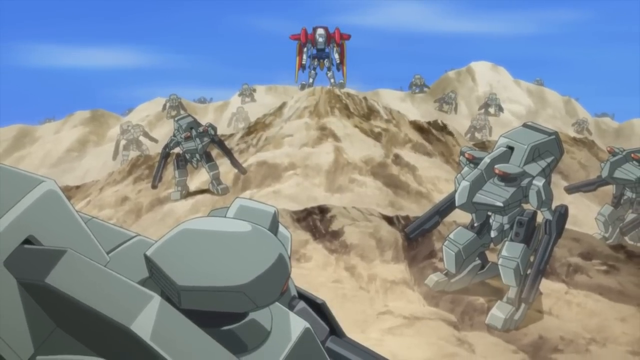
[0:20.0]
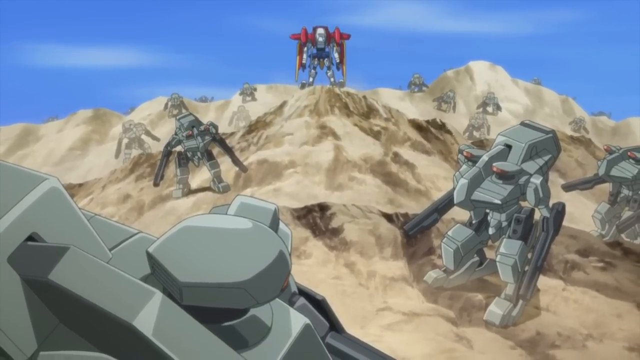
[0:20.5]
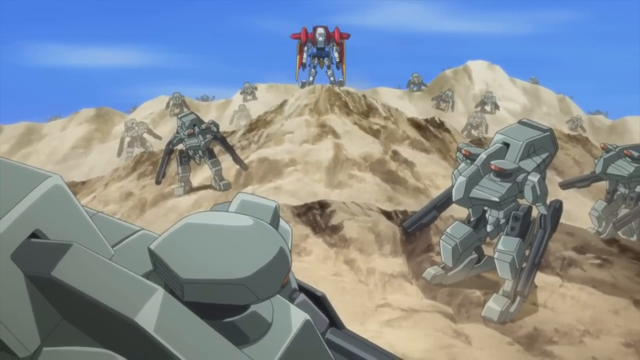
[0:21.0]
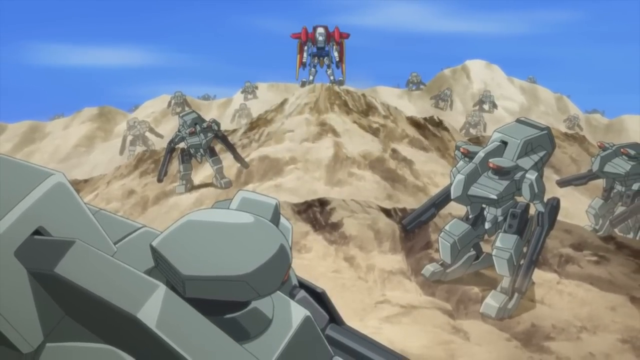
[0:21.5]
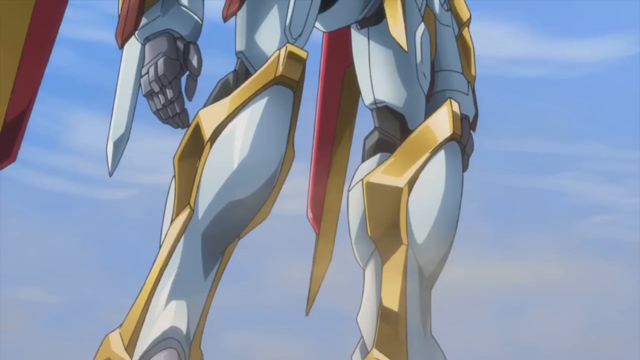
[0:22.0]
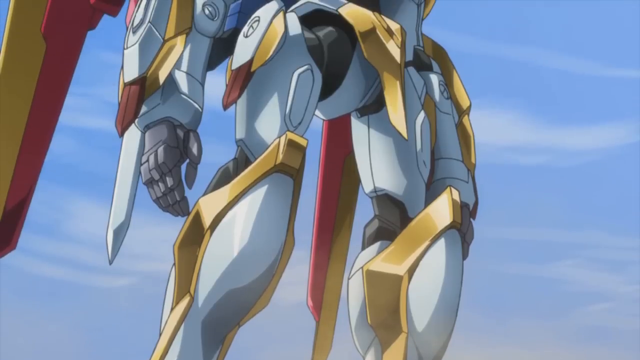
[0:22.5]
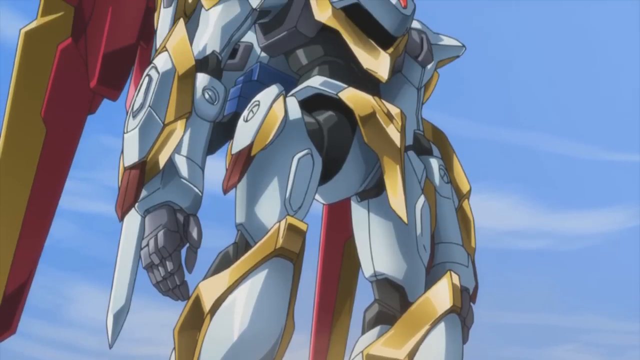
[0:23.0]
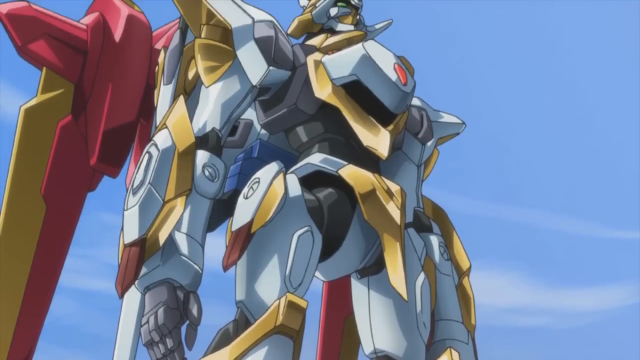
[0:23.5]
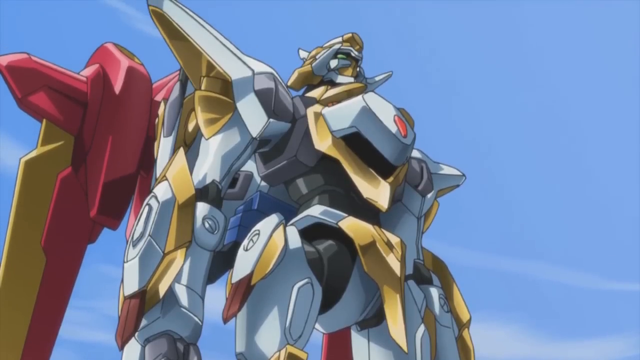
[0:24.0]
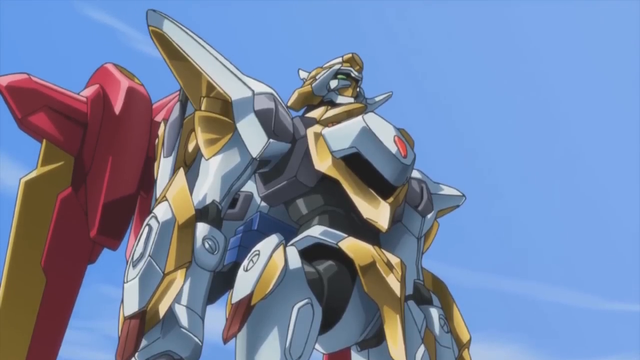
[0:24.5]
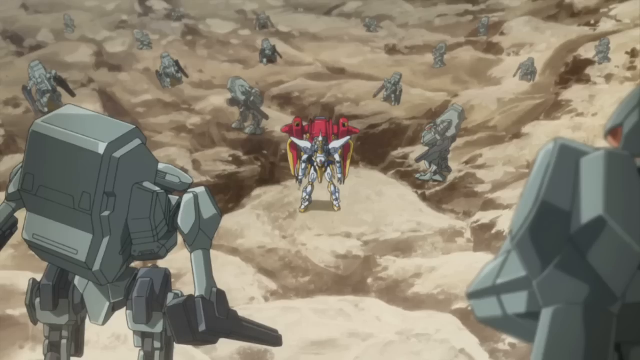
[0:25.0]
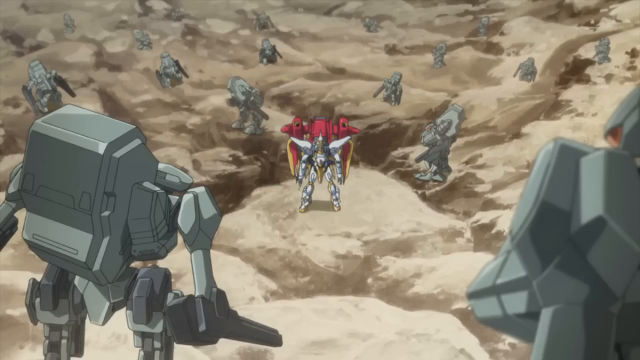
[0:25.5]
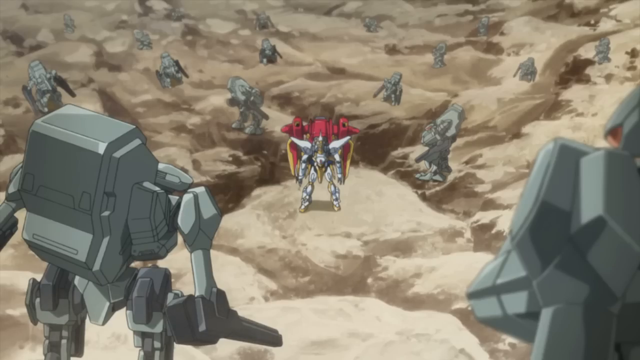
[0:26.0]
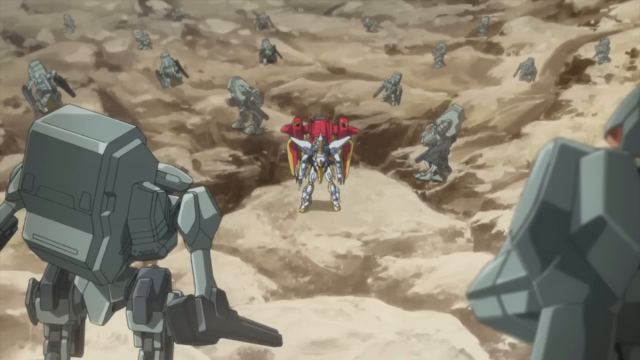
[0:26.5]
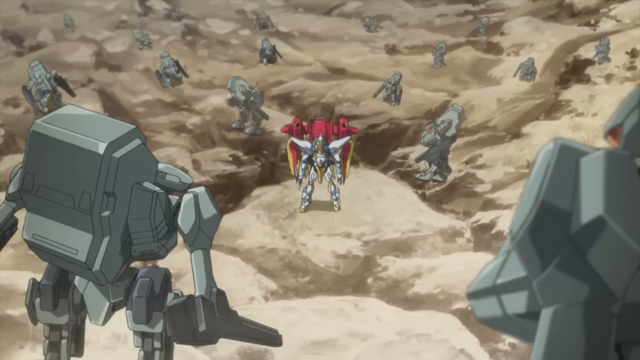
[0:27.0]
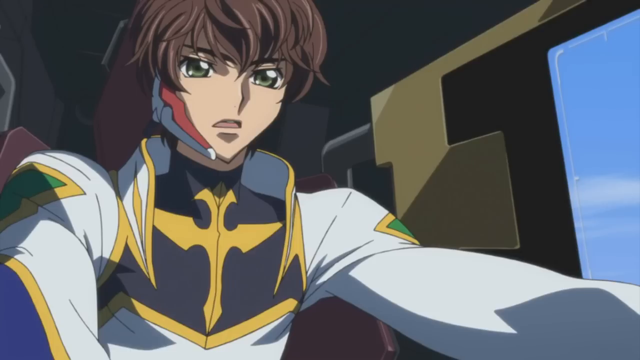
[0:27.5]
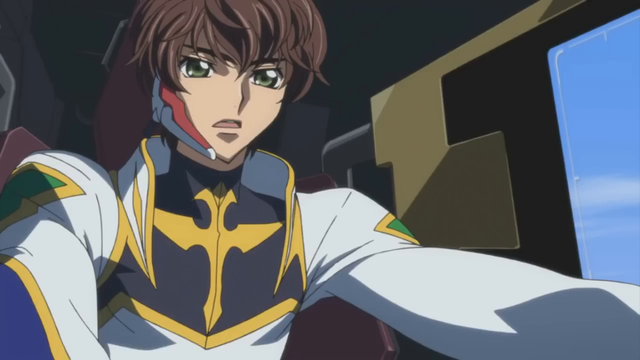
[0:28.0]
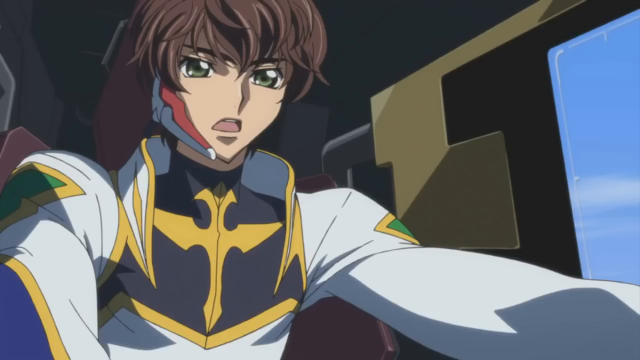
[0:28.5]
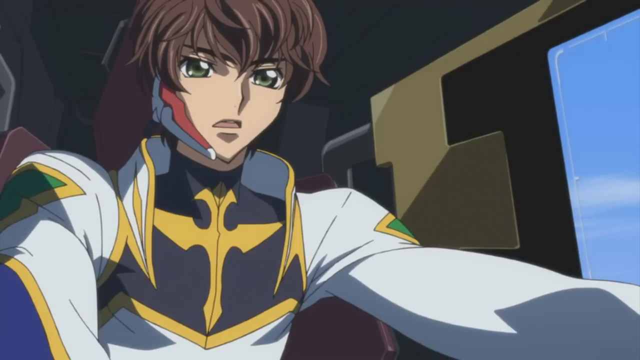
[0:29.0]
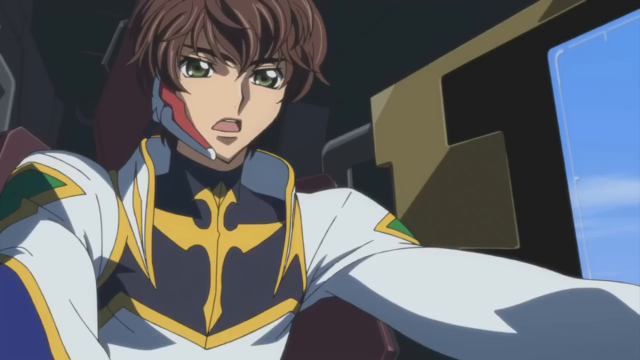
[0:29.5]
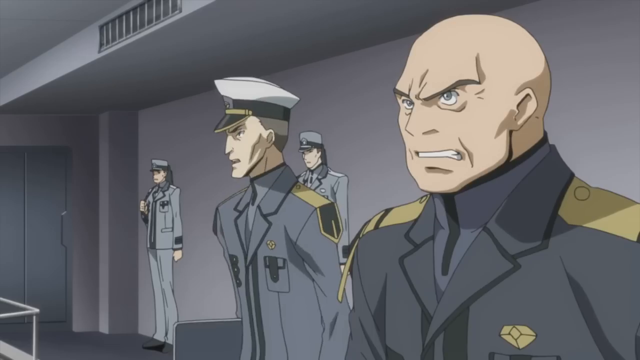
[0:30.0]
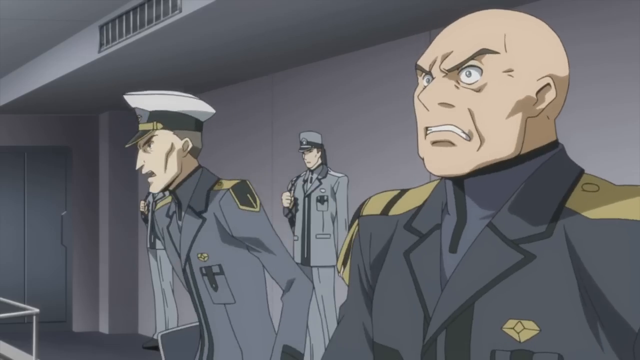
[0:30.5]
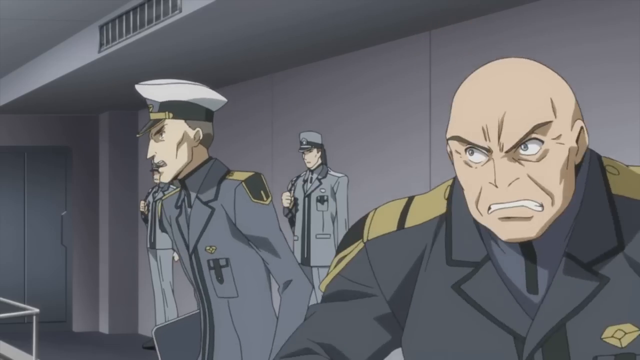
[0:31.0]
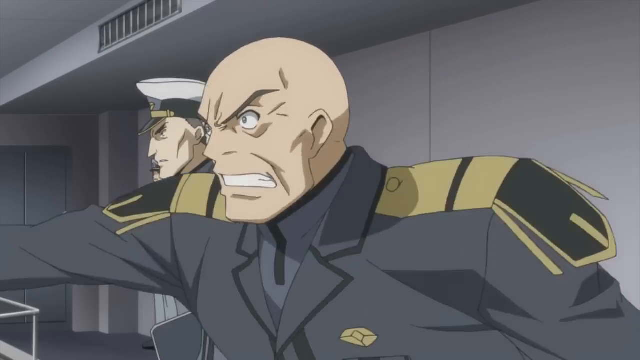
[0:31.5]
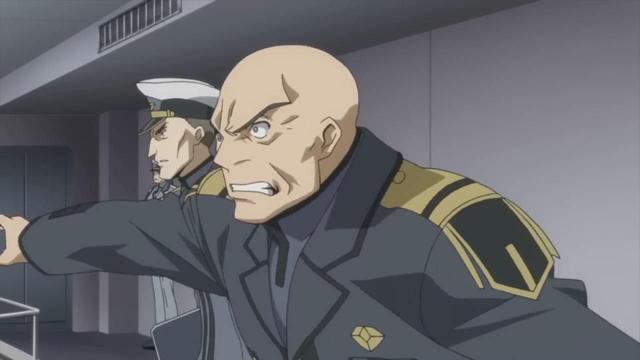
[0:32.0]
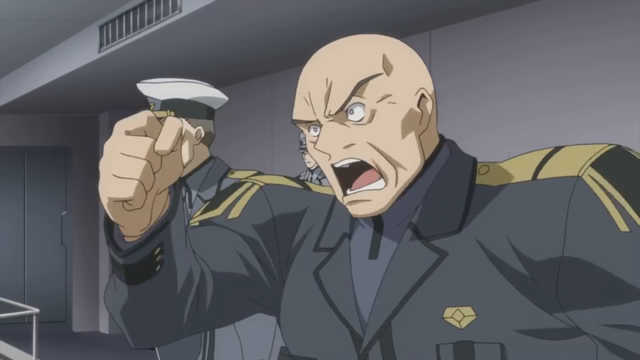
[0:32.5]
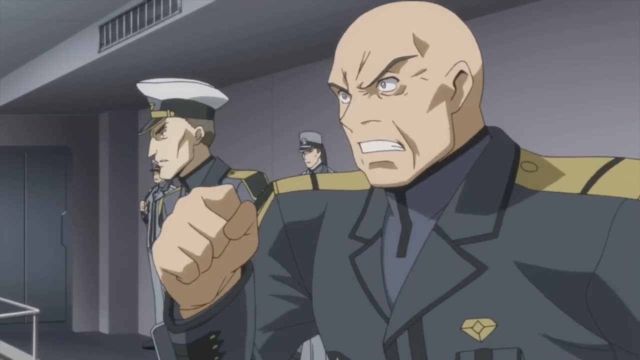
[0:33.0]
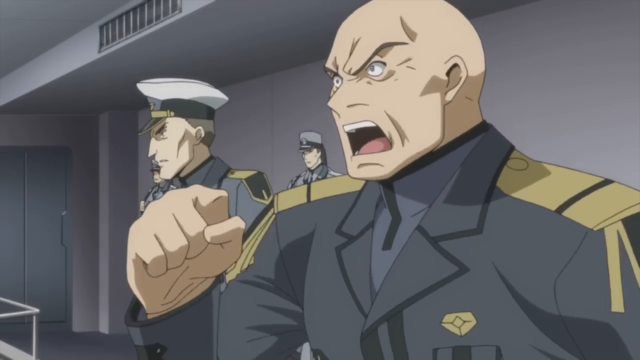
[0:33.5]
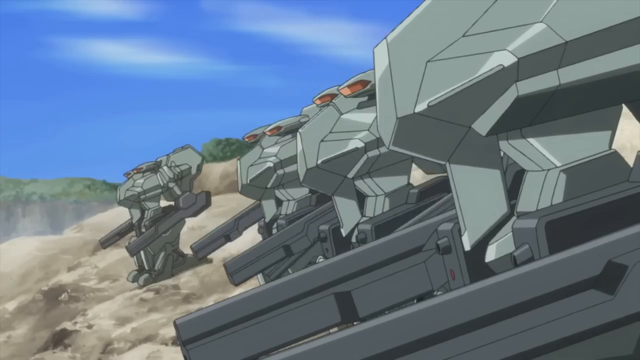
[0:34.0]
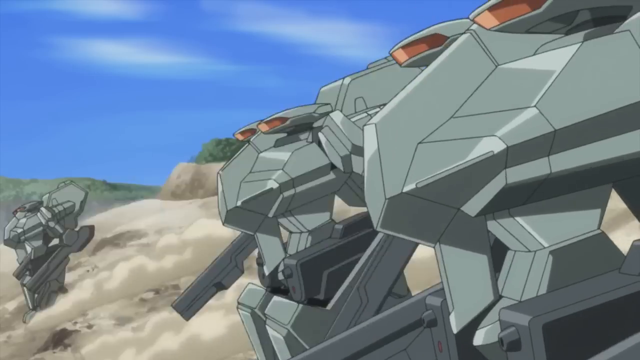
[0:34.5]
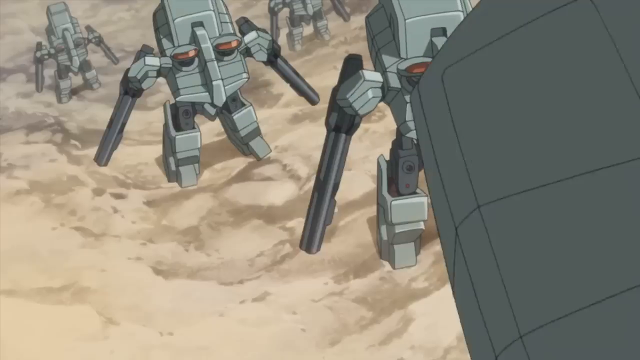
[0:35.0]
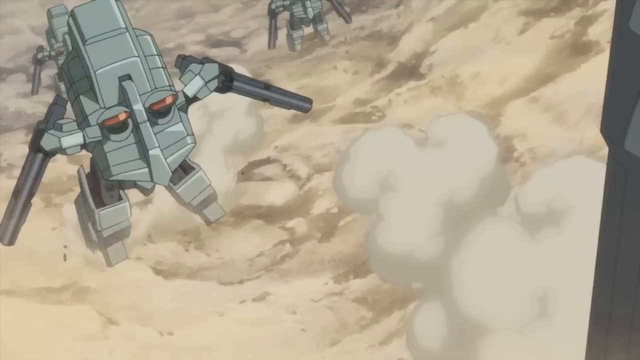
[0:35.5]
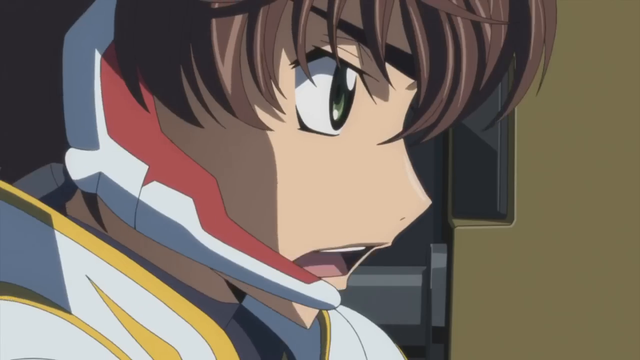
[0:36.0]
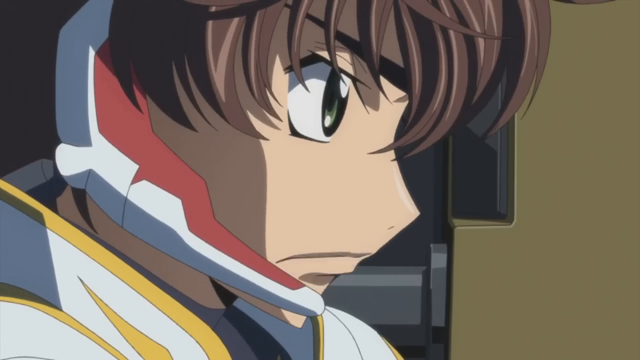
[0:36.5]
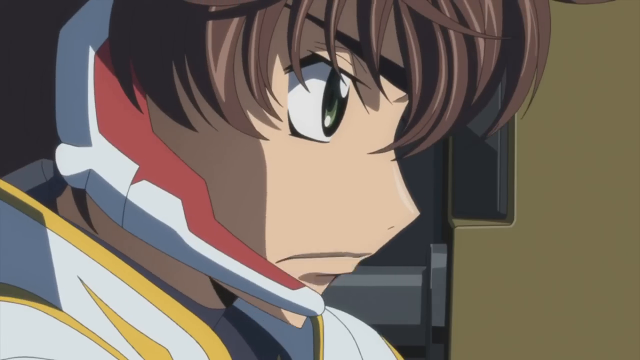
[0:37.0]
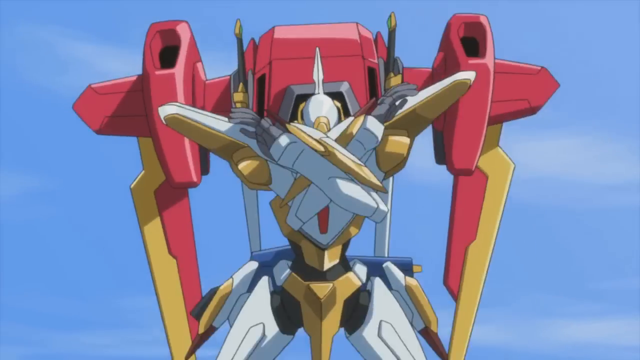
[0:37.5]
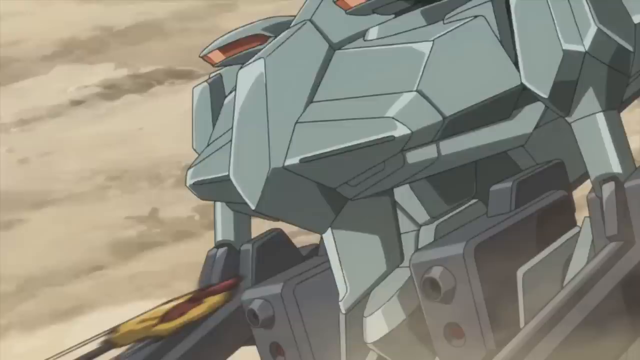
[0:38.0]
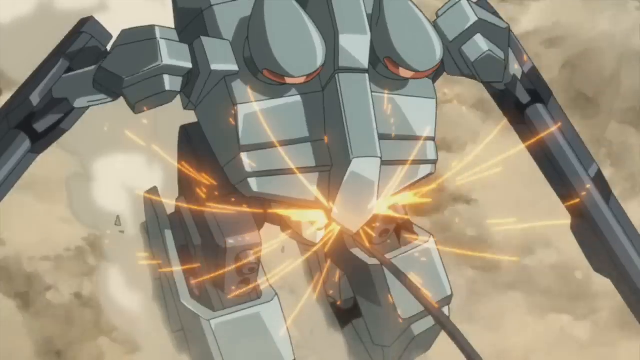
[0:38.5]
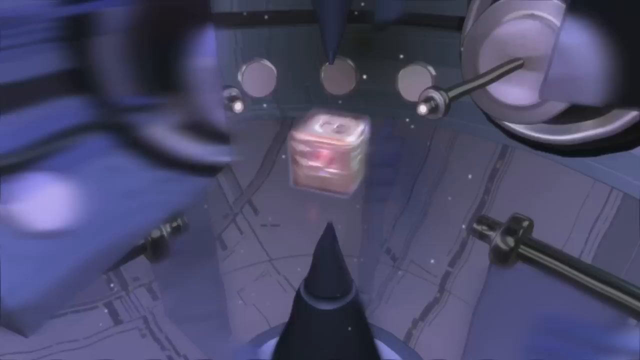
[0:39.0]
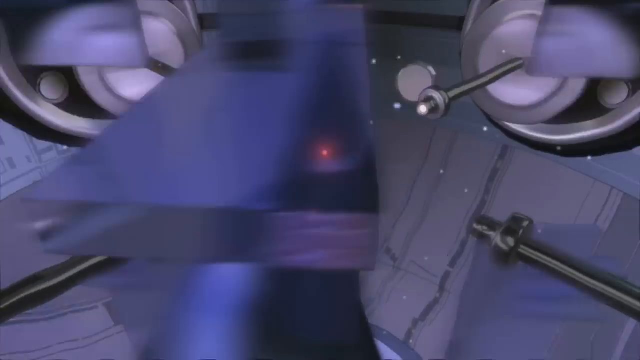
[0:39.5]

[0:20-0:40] The main leader with the red armor is shown; the armor has red and yellow coloring, and a male anime character may be inside the robot suit of armor. He flies in the air, and the suit's arms are very elongated. Outside, the sky is clear and blue. The anime character in the robot attire goes against all the robots in the field. They are gray and stand on what looks like a mountain or some type of dirt, and fire shoots from the armor they are wearing. A lot of them stand outside in the field. There are older male characters who are soldiers, possibly four in total, who look very angry. They are of Caucasian descent and appear to be commanding the robots to war against the main robot character.